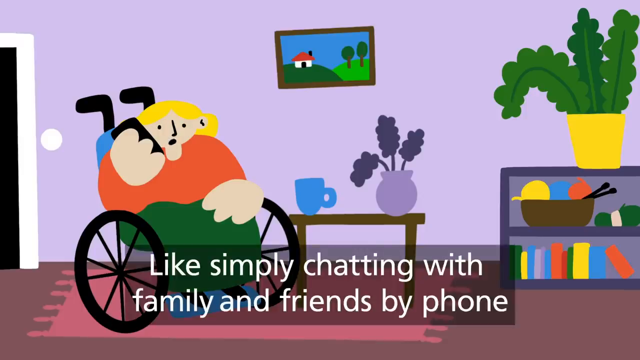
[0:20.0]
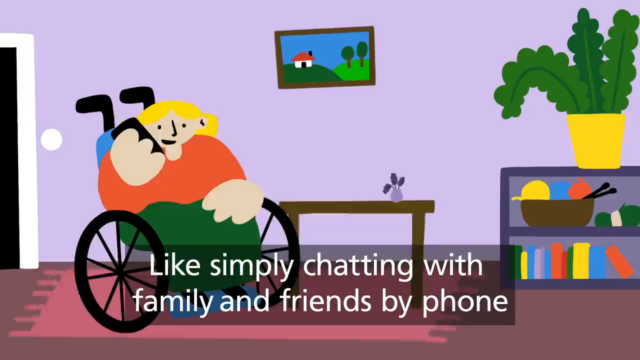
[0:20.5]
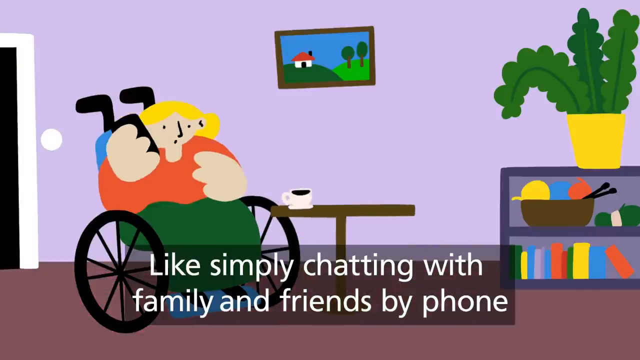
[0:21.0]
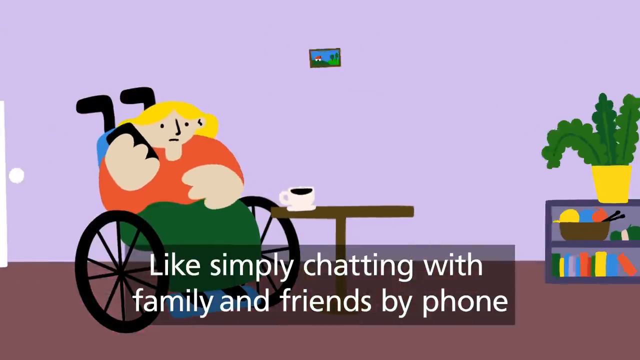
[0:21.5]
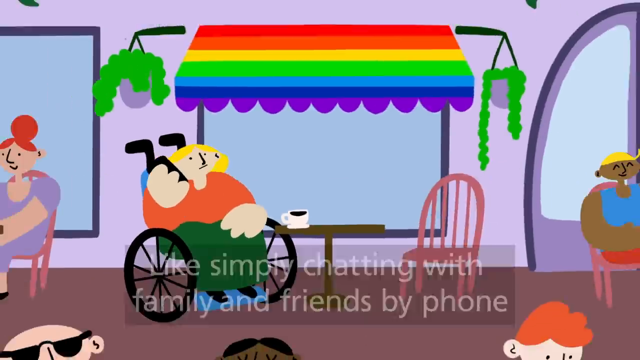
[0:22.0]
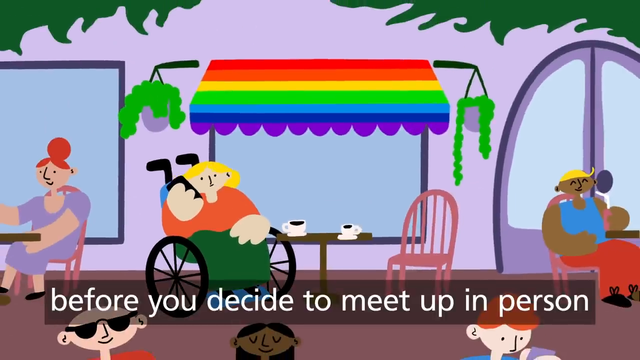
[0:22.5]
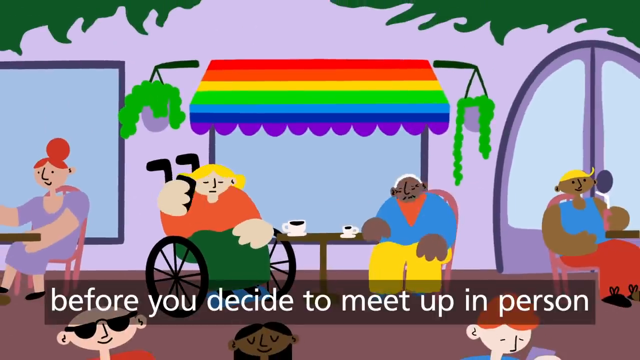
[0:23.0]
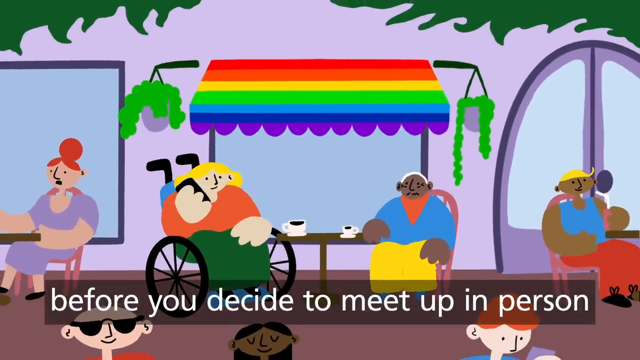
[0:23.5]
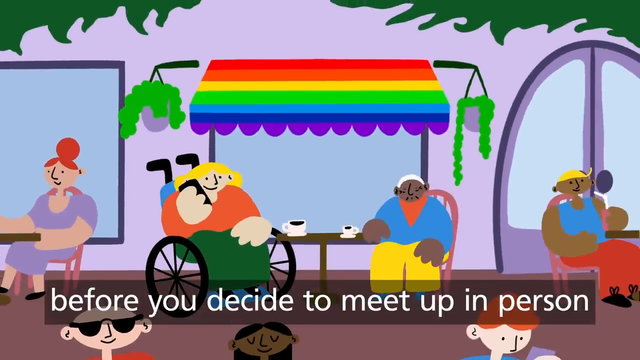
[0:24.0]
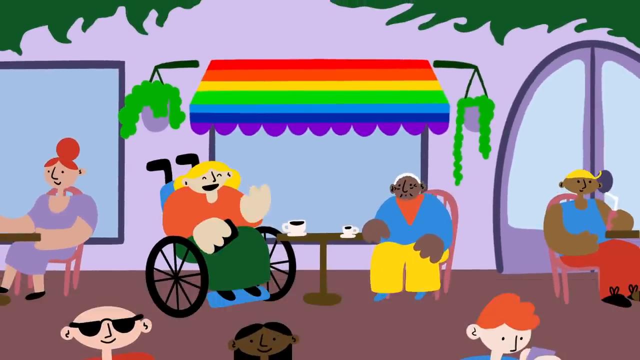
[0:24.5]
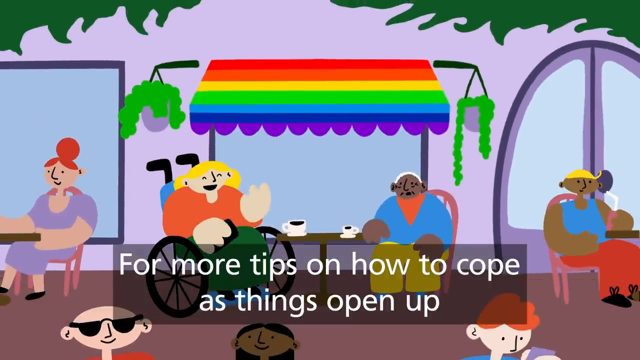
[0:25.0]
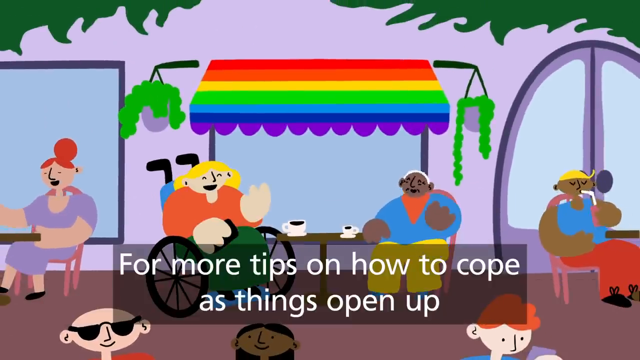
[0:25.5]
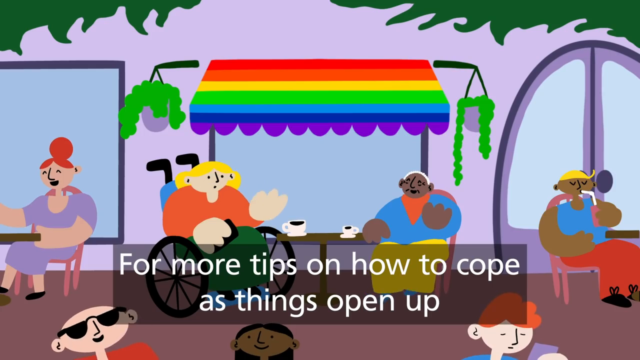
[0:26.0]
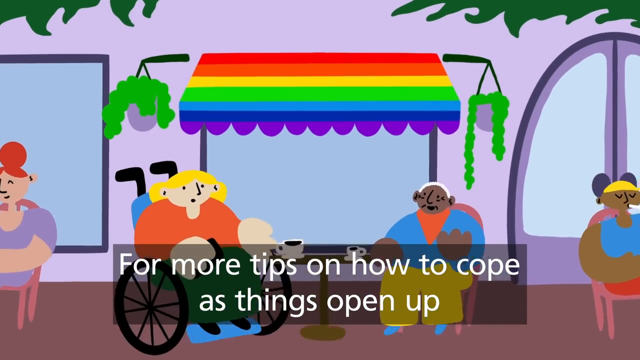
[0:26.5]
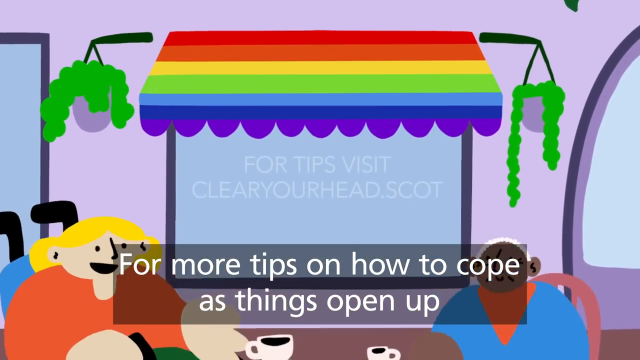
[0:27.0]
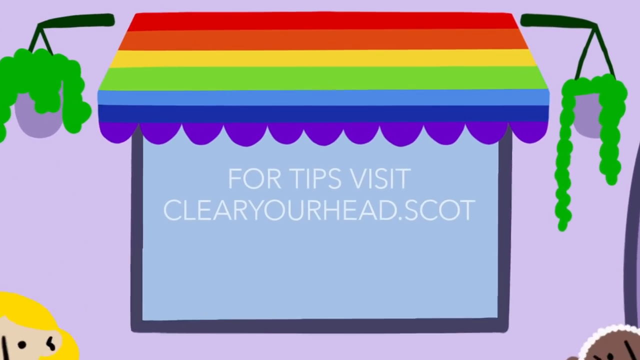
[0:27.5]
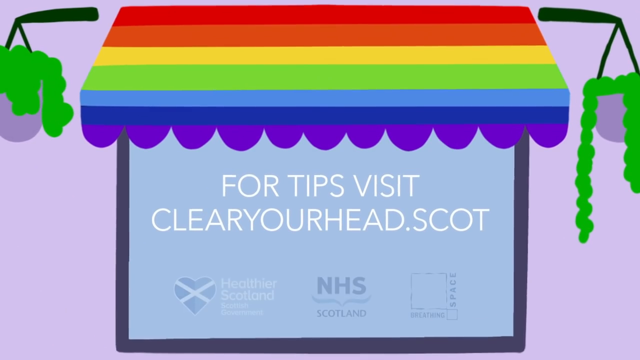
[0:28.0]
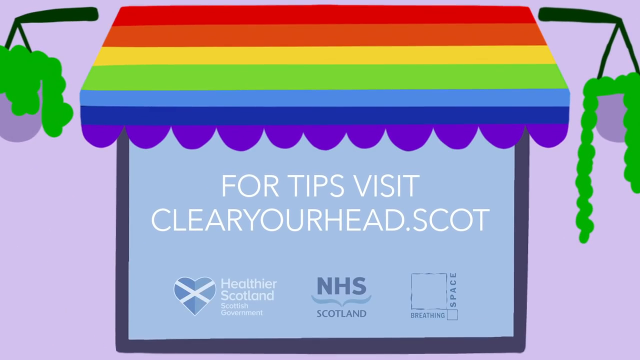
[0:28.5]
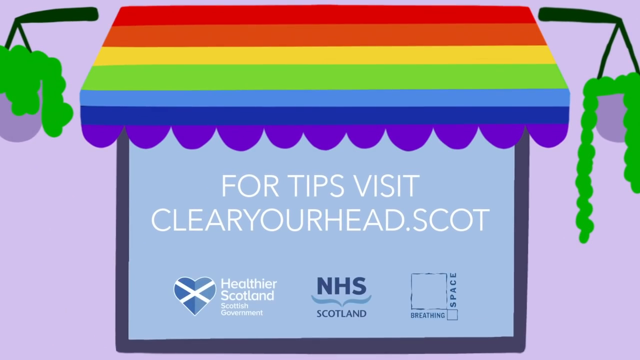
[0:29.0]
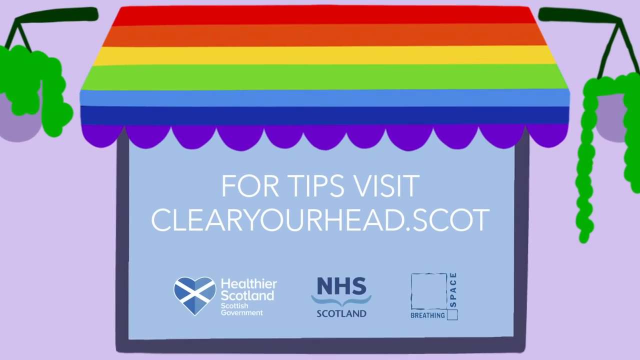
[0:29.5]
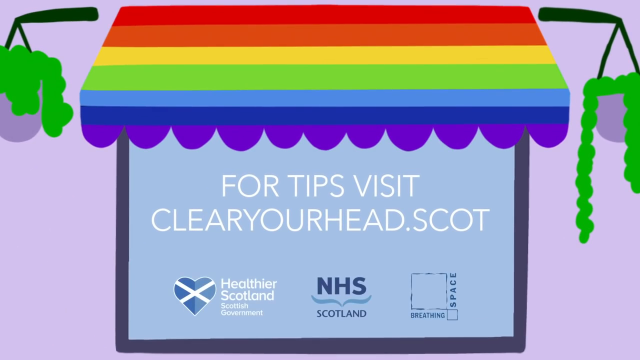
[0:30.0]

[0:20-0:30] The scene cuts to a person in a wheelchair sitting in her living room, talking on the phone to someone. Some cabinets and a picture on the wall are visible. One of her cabinets transforms into a coffee table with a coffee sitting on it, and the whole scenery changes: she is now sitting in front of a cafe under a rainbow sun sail, still on her mobile phone. Suddenly someone is sitting on the other side of the table from her. The view then zooms in on the window they were sitting in front of, where the text reads "for tips visit clear your head.scot". It is apparently an advertisement for mental health.